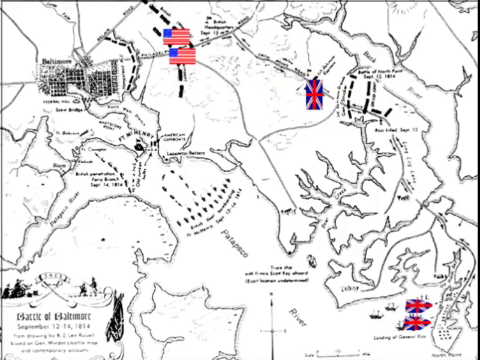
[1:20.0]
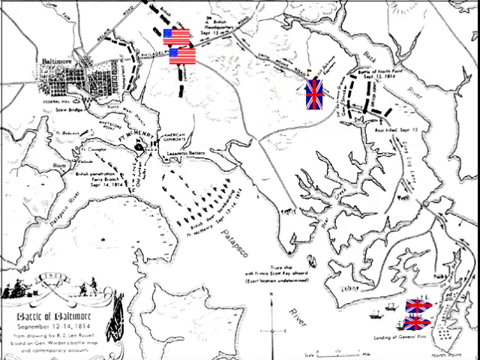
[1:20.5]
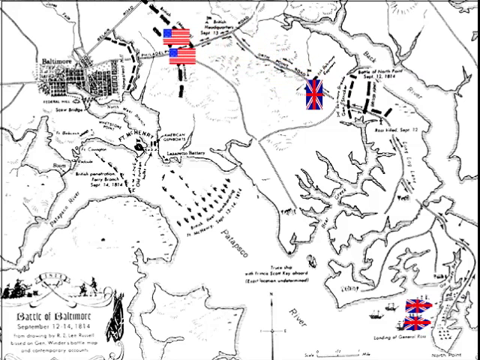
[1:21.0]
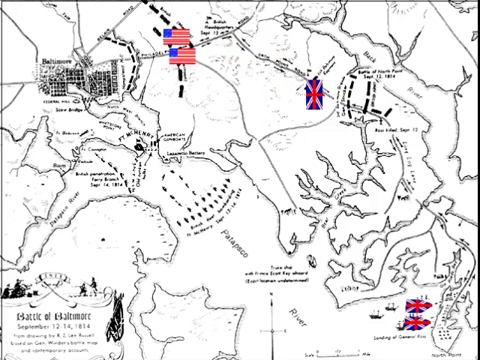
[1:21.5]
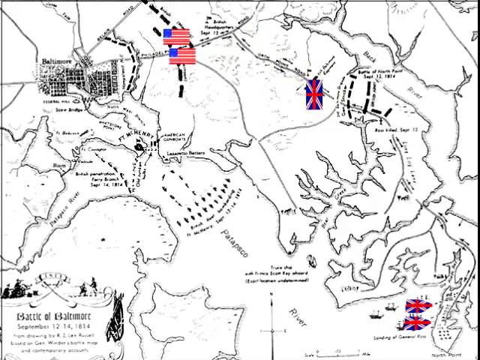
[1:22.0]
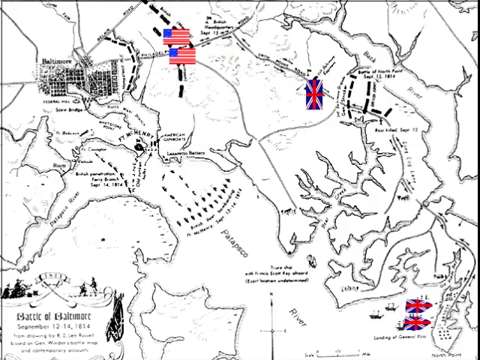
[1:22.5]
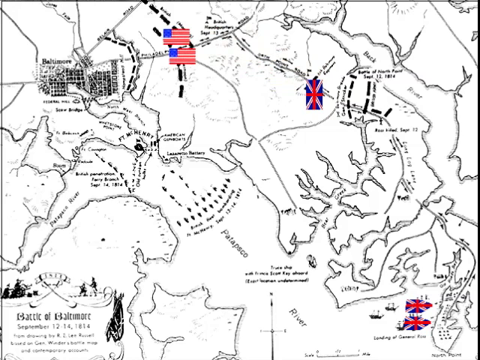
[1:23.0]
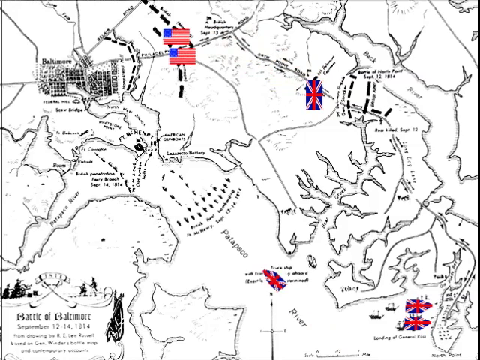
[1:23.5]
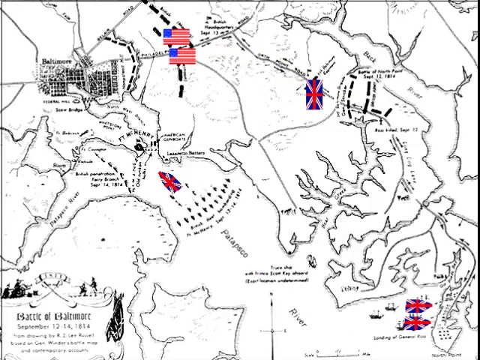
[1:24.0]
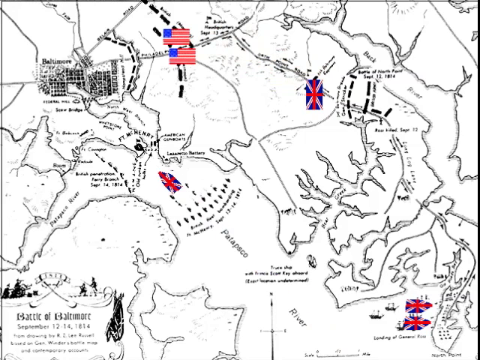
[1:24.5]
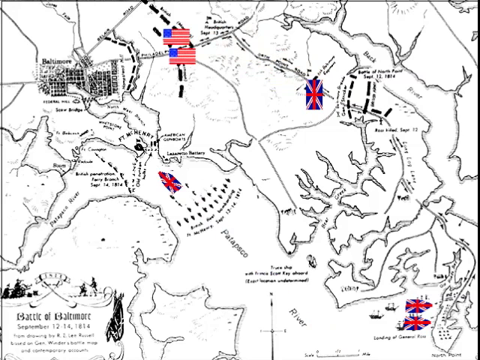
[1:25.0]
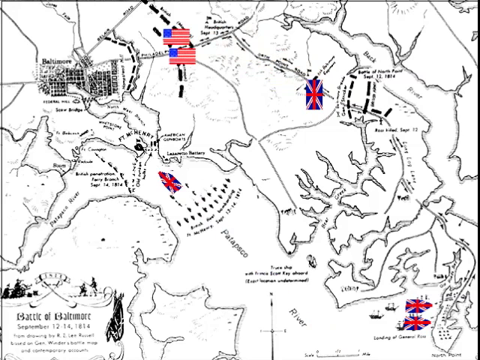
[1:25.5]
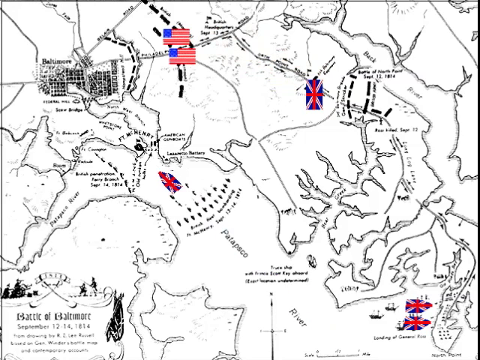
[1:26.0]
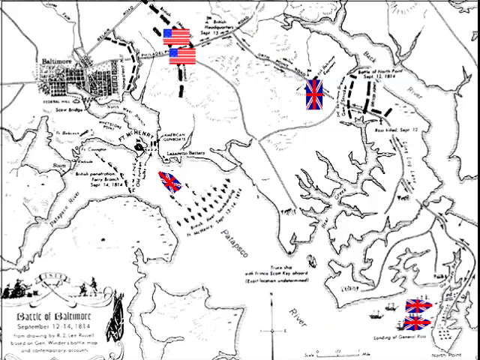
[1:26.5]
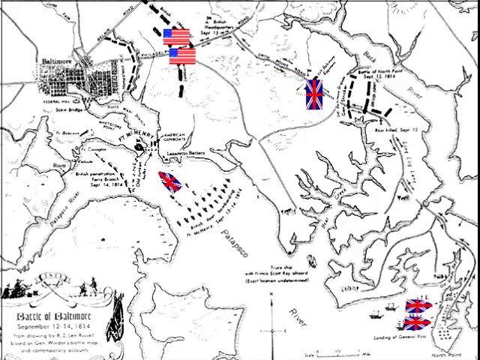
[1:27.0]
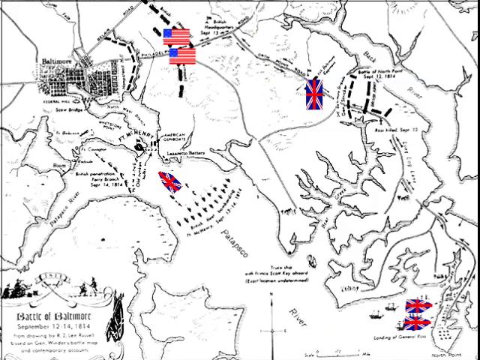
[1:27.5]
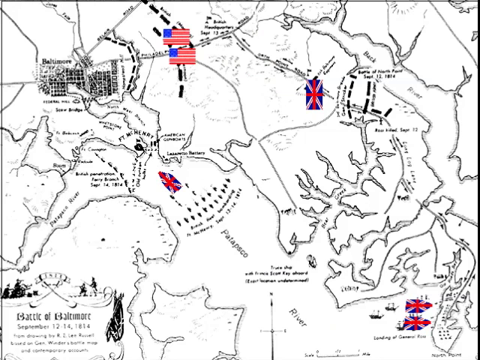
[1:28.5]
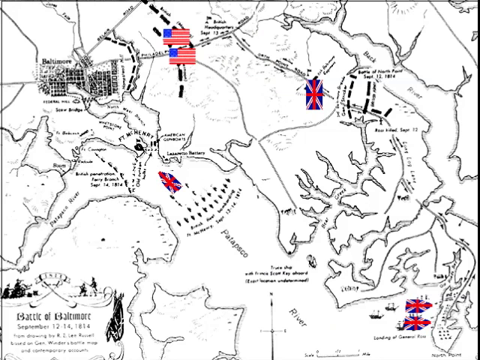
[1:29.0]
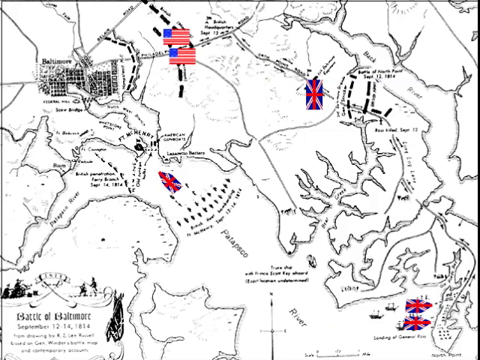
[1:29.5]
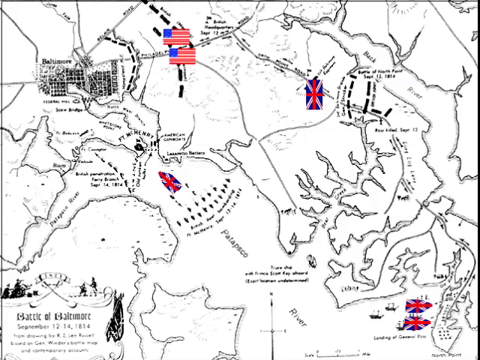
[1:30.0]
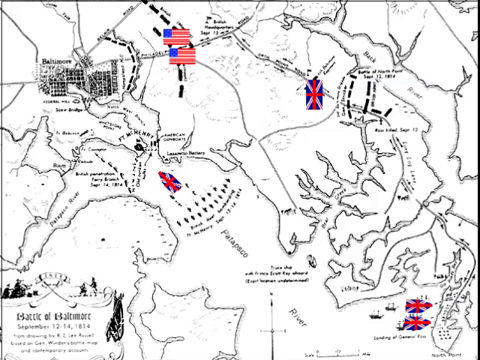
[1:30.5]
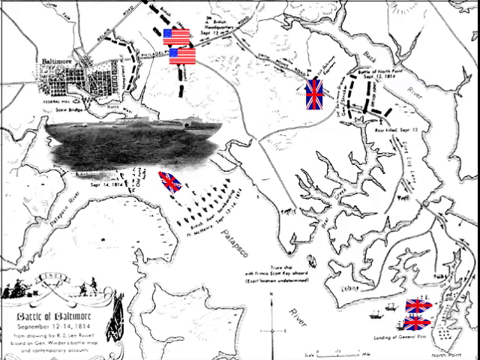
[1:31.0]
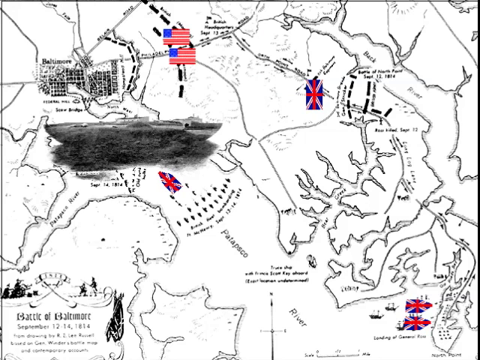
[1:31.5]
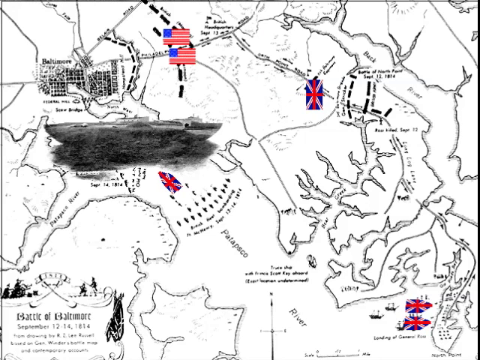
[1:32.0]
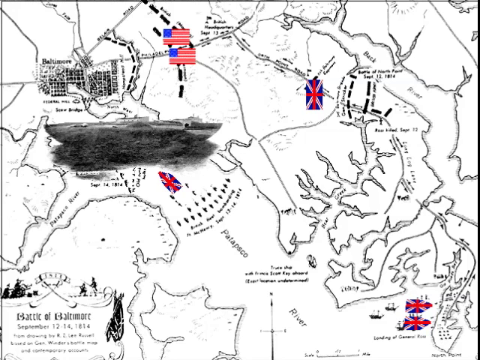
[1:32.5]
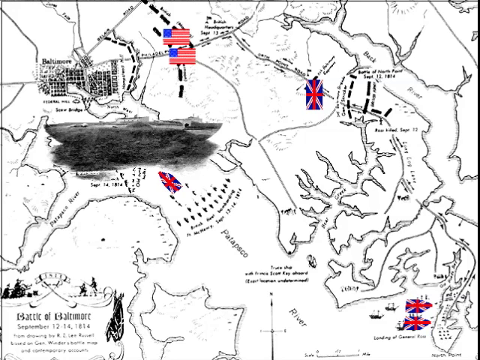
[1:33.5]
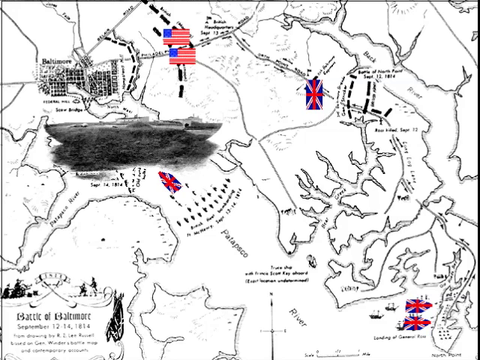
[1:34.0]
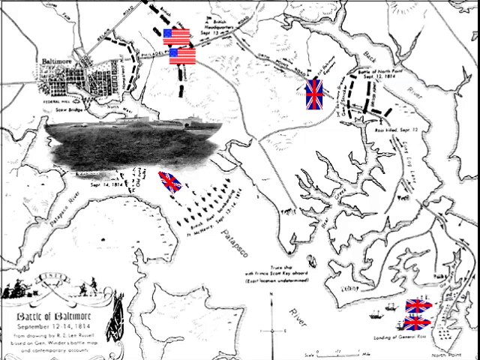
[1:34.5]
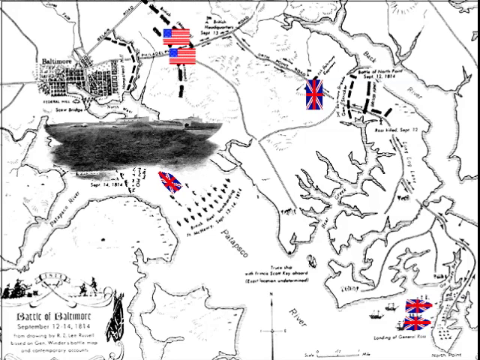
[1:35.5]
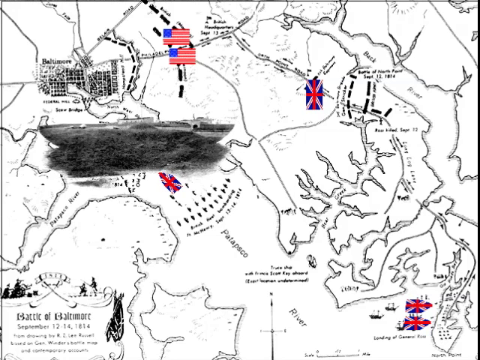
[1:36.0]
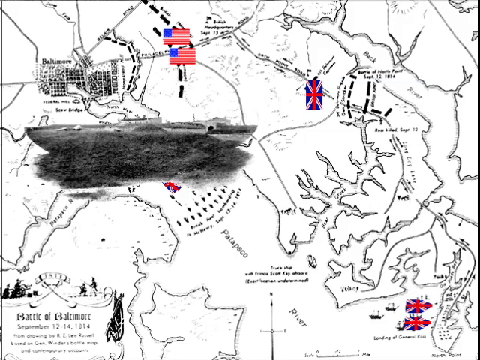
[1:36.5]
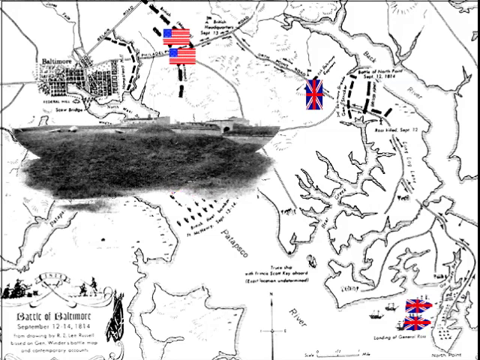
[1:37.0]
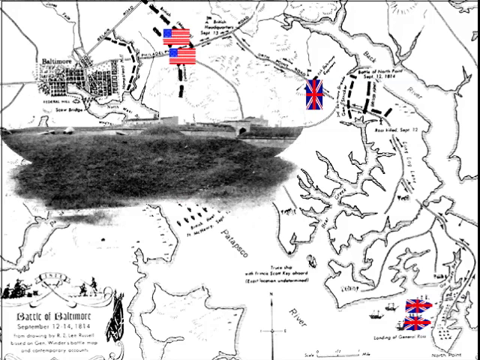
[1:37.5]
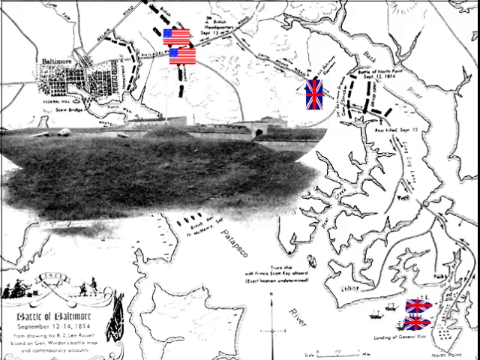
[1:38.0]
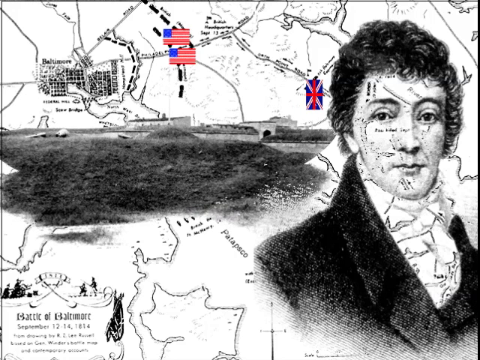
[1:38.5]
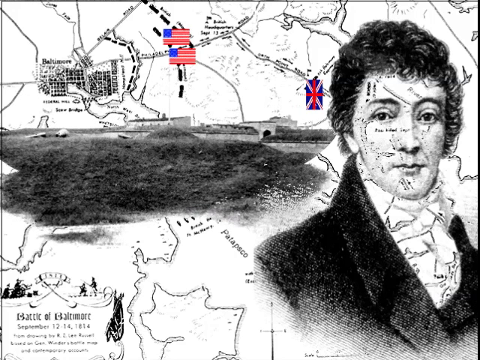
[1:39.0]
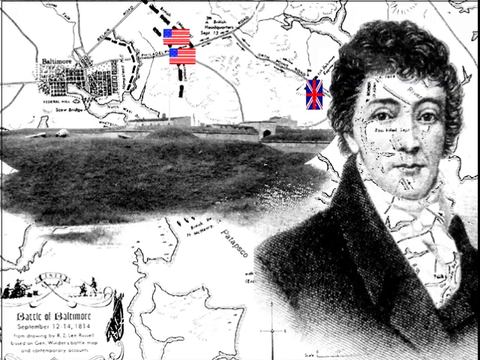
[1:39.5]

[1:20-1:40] An overhead view shows a map drawn in shades of black and gray, depicting the Battle of Baltimore. There is a waterway, apparently the Patapasco River, and a bay with ships, seemingly British since they appear to be represented by two flags of Great Britain. The flags move onto shore and continue inland north, near what is apparently the Hack River, where there are two American flags. The flag of Great Britain pushes the American flags north, apparently until they retreat on their own. Then one of the flags of Great Britain moves north on the river like a ship, toward the American flags. A large shade of gray appears, and as it comes closer it turns out to be a grassy field.